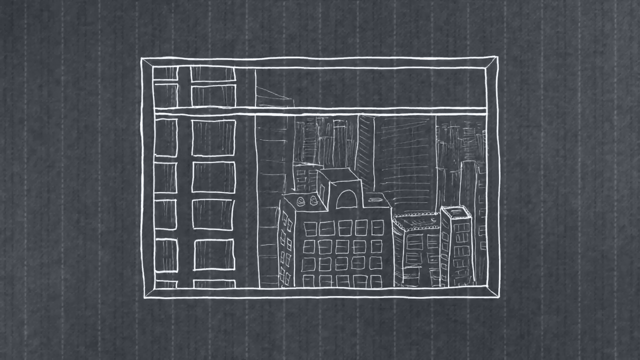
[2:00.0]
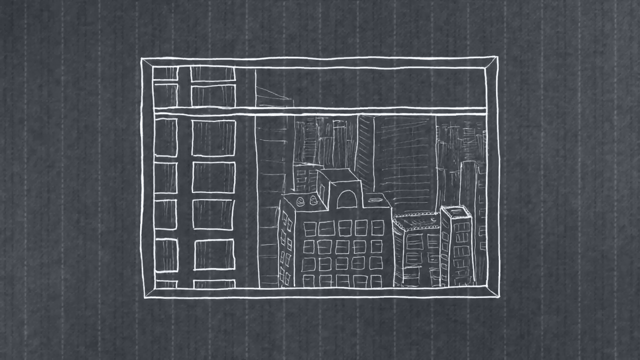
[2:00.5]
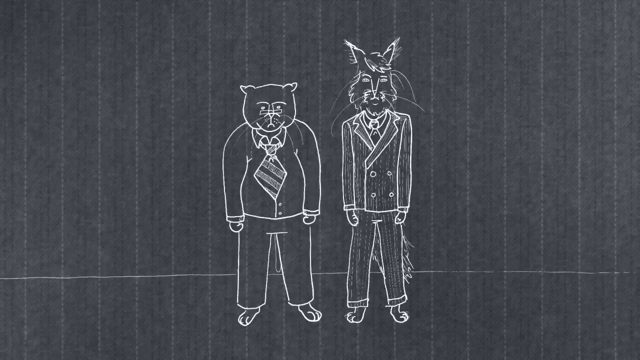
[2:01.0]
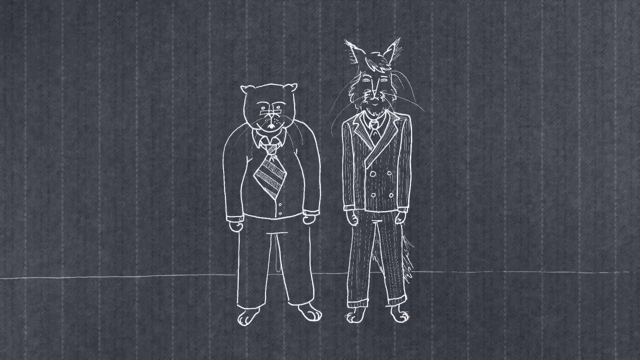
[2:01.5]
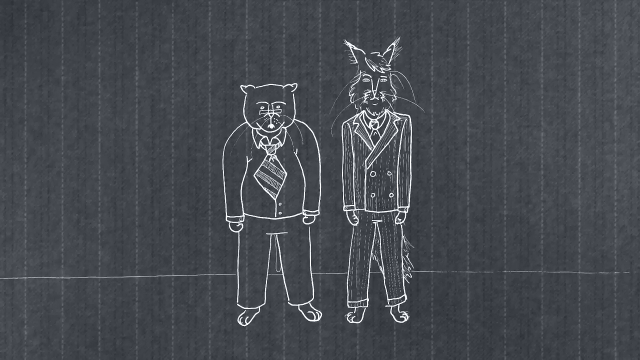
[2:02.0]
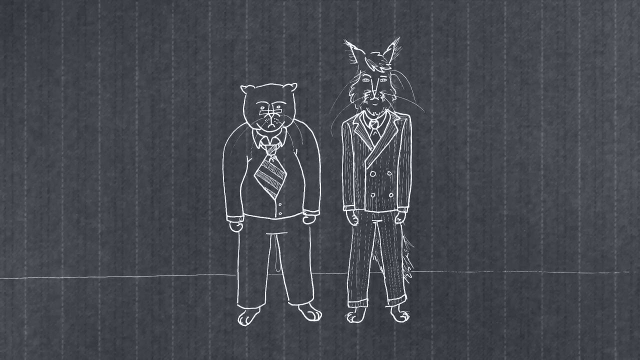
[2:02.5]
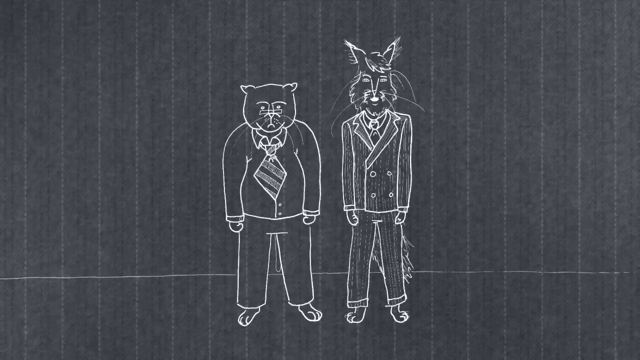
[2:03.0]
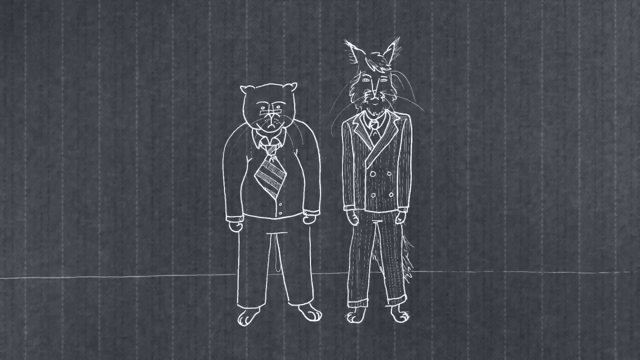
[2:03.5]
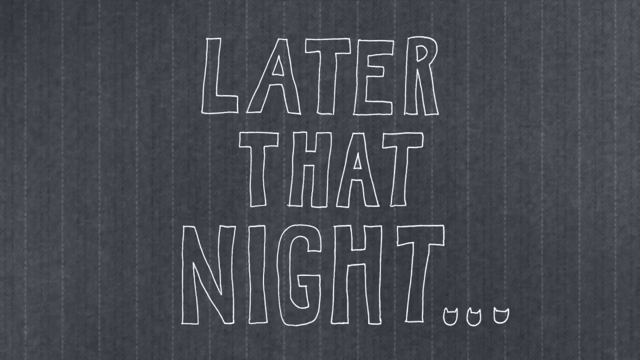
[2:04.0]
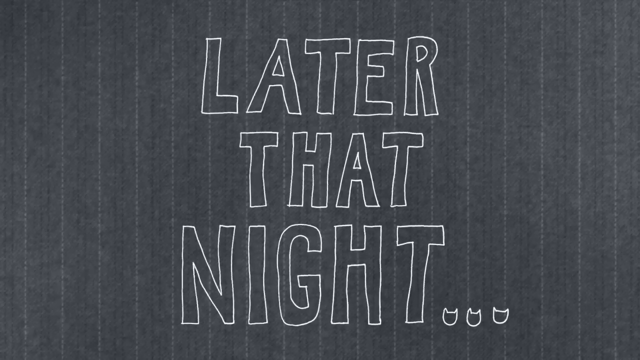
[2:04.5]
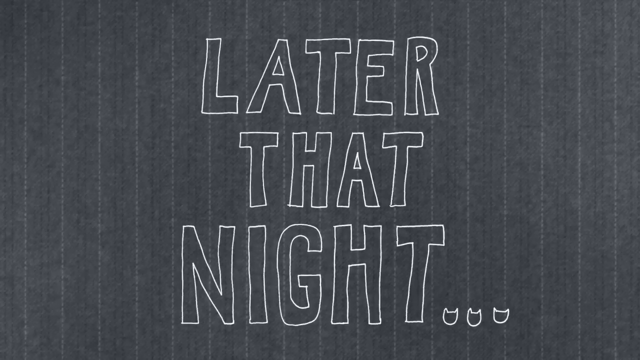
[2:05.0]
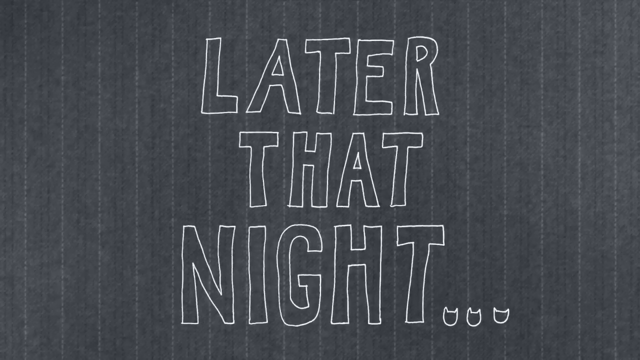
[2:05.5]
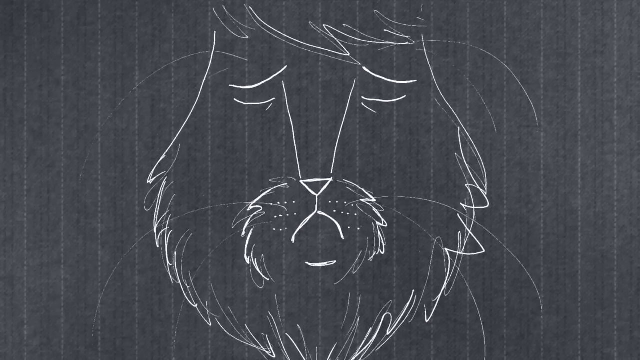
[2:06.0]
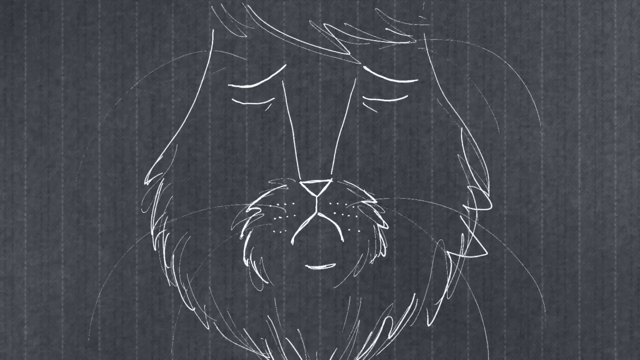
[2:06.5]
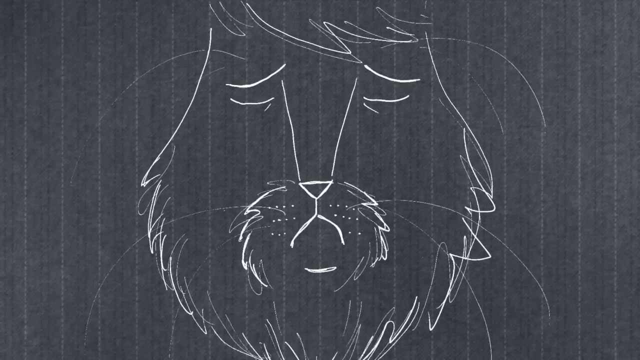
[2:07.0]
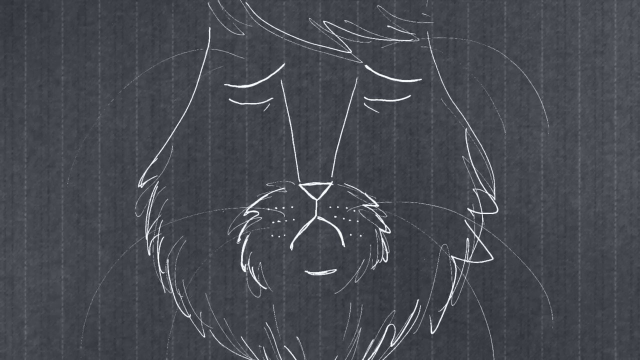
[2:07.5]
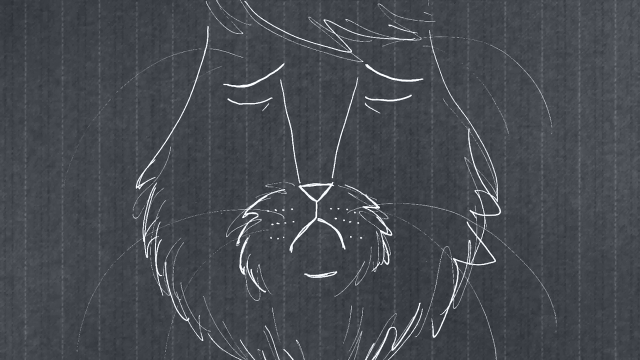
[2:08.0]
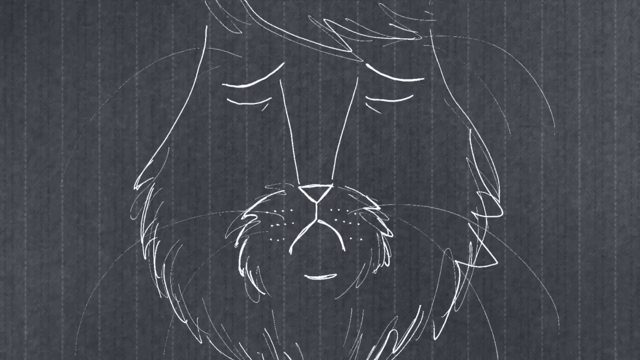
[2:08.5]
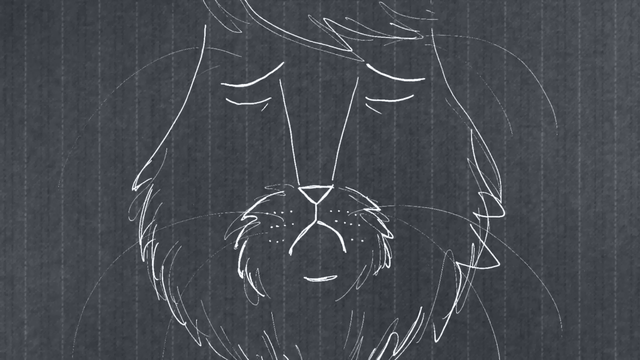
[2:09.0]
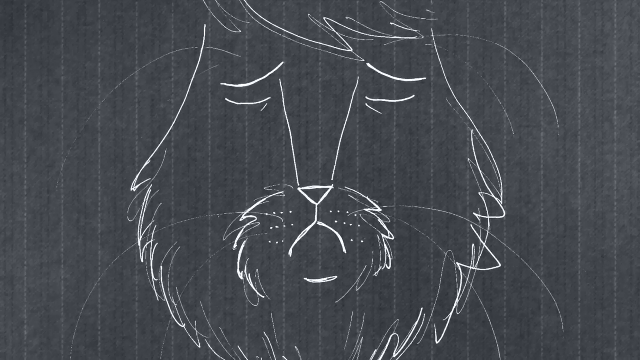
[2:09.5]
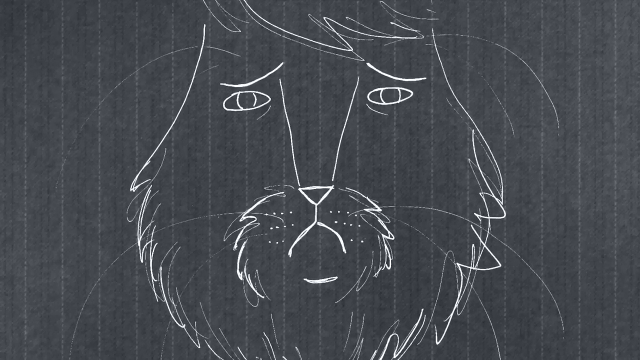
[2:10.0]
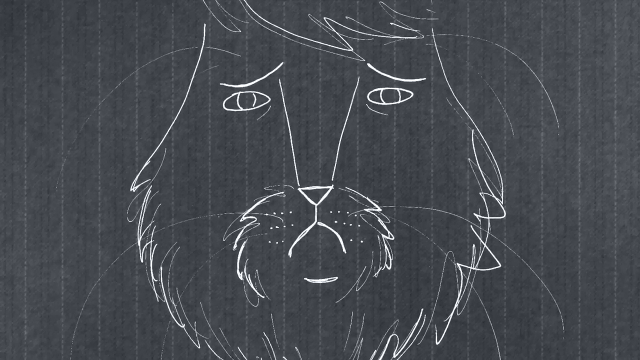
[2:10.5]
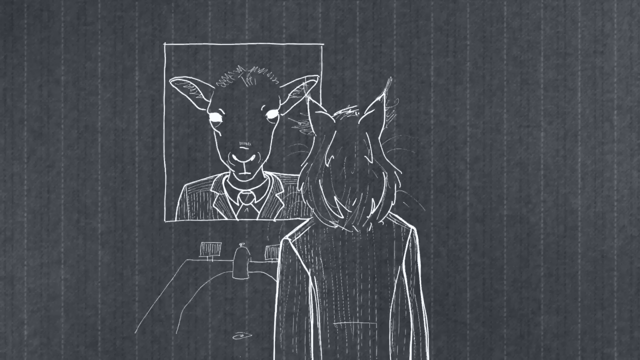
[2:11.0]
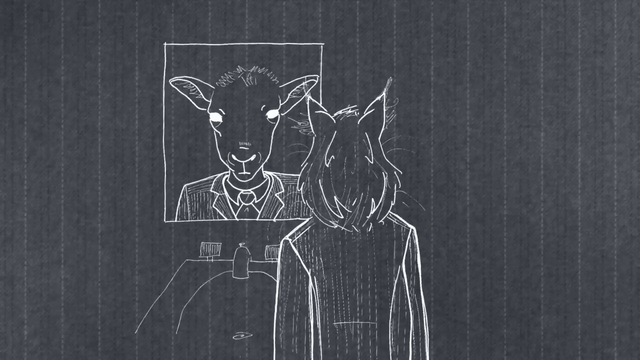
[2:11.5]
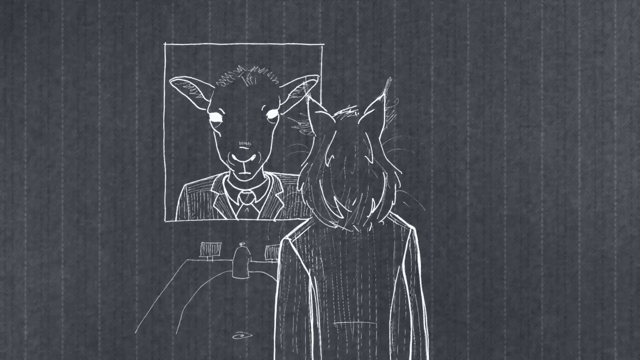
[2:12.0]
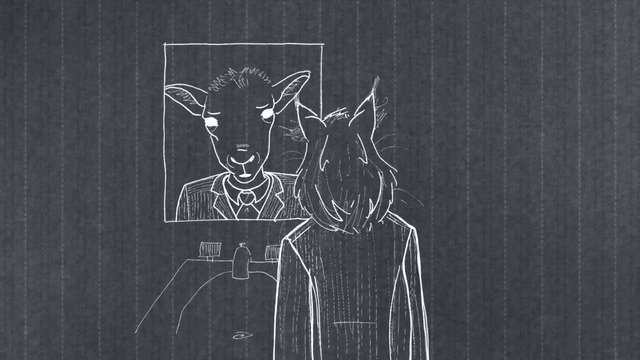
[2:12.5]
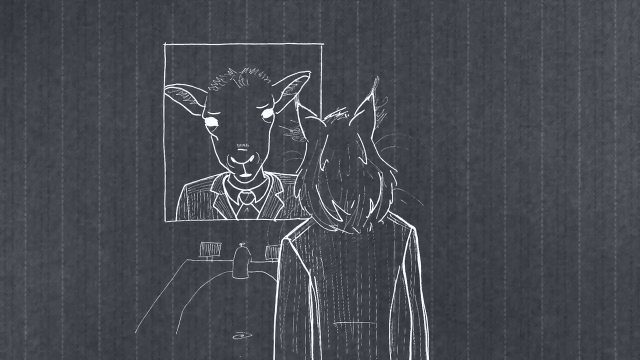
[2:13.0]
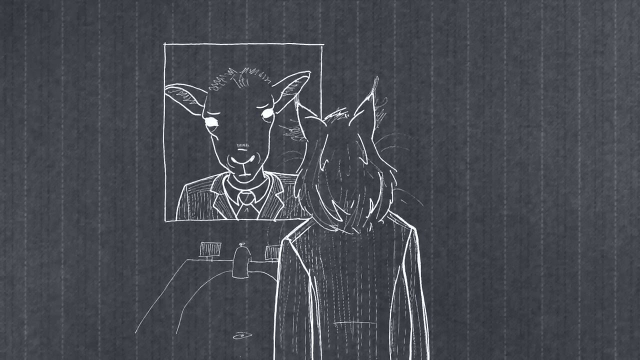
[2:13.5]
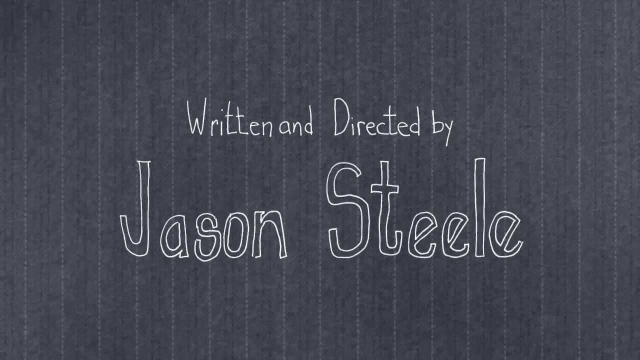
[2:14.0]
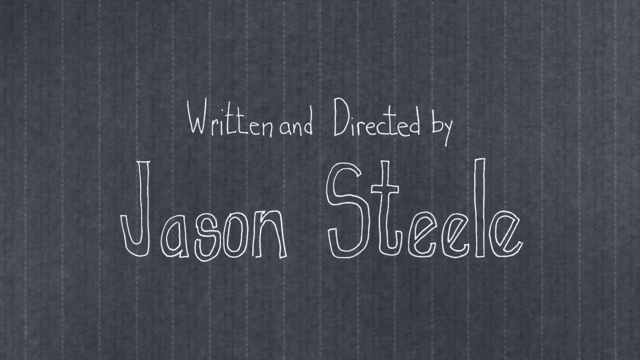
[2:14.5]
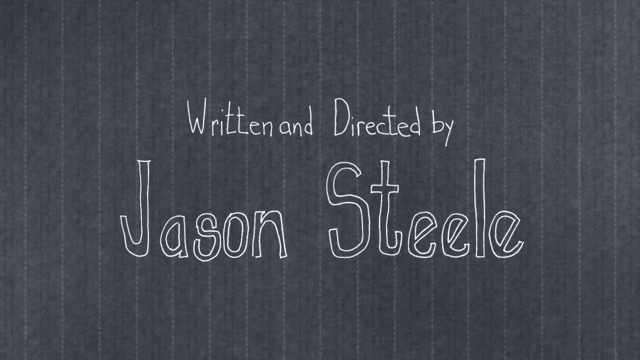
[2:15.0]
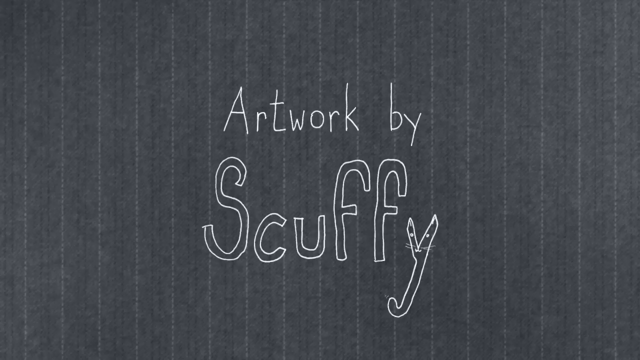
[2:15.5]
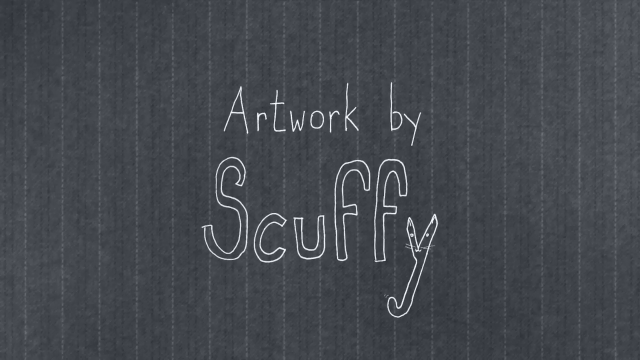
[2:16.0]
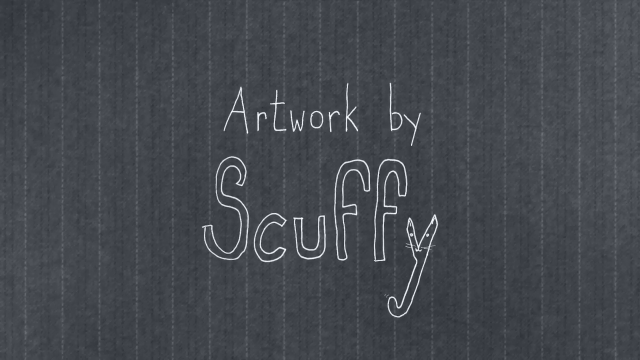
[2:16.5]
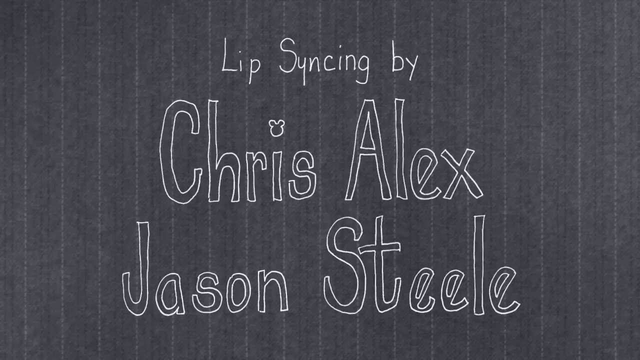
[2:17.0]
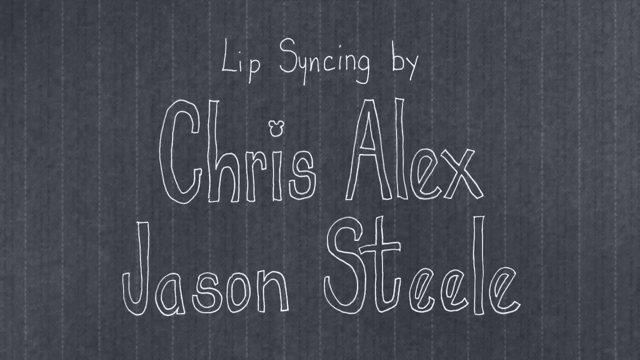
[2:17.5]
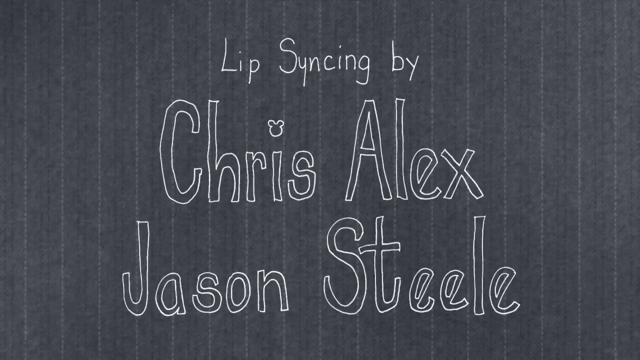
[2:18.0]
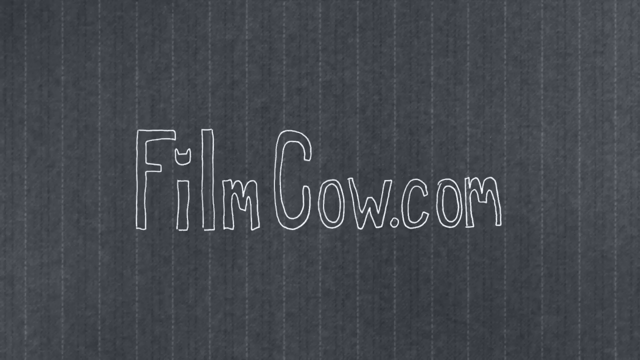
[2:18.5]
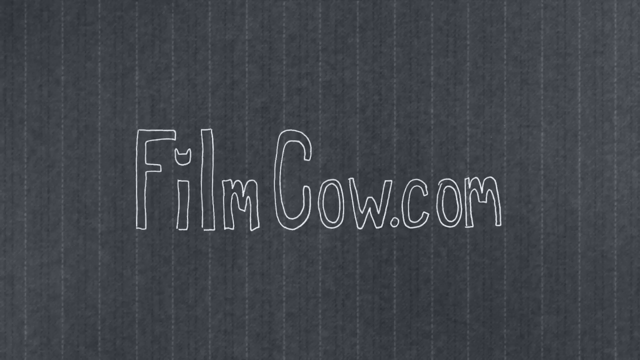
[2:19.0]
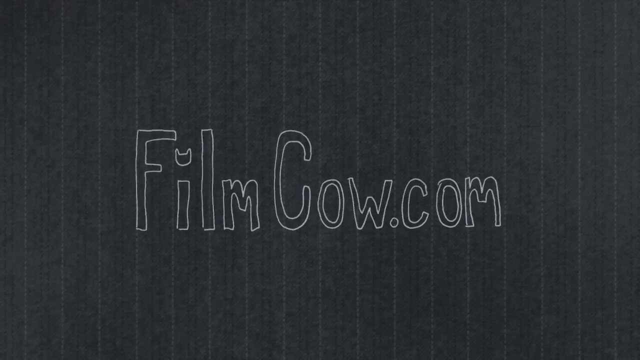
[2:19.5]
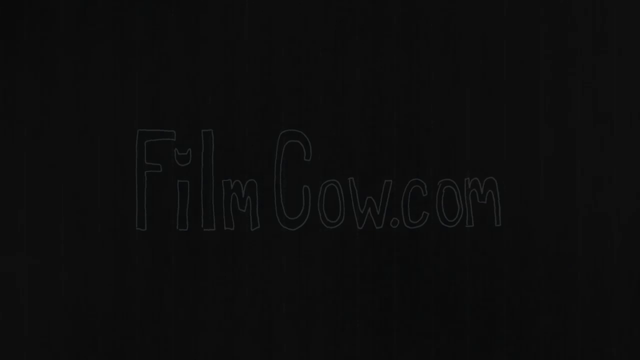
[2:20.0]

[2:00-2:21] Anthropomorphic cat characters with arms and legs, wearing clothes, are drawn in white lines against a grey background with a texture and faint pattern that look almost like fabric. Two of them stand side by side: one is tall, wears a business suit, and has long ears and a fluffy face; the other is shorter, with a square head and short ears, and wears a shirt, pants and a very wide tie. The image disappears and on-screen text reads "Later that night." A close-up shows the fluffy-faced cat, and then he stands in front of a mirror, but his reflection looks like a sheep rather than a cat. A series of title cards follows: "Written and directed by Jason Steele," "Artwork by Scuffy," and "Lip syncing by Chris Alex, Jason Steele." It ends with "FilmCow.com" as the screen goes black.